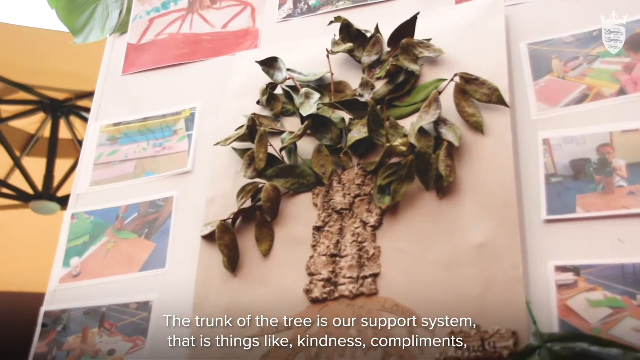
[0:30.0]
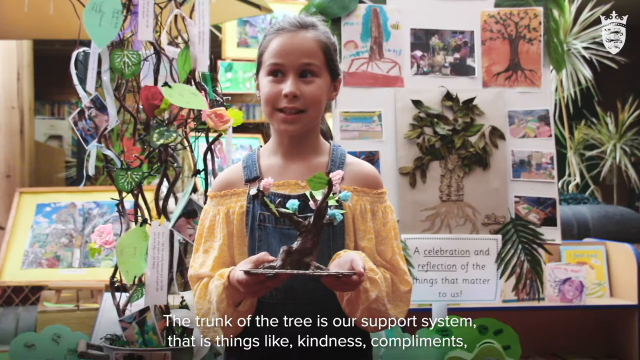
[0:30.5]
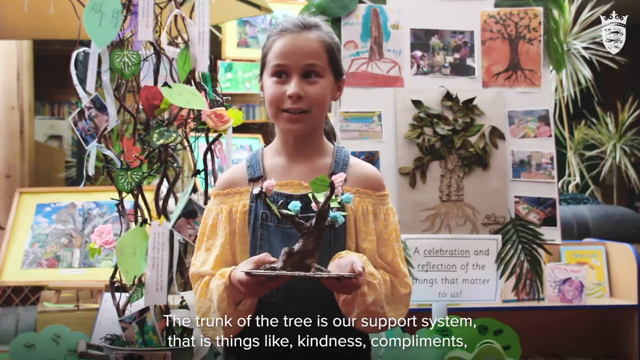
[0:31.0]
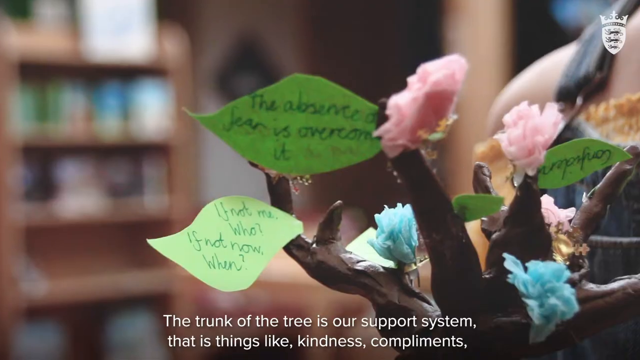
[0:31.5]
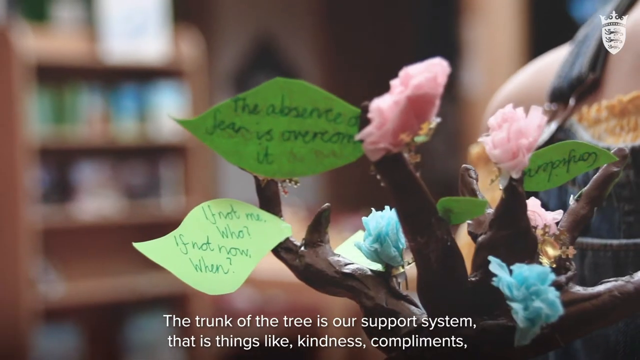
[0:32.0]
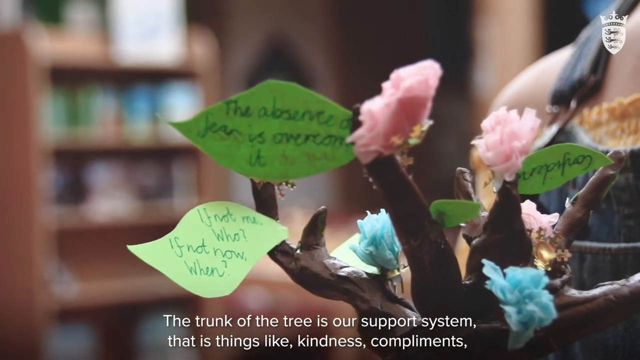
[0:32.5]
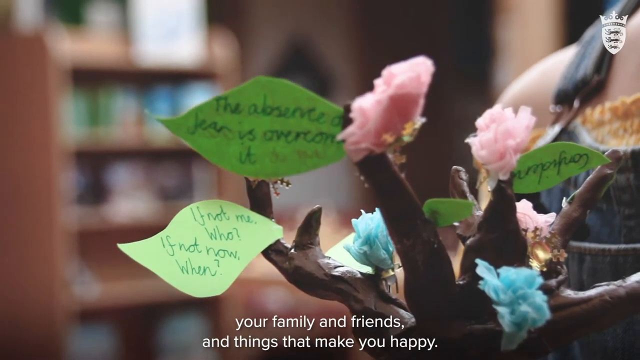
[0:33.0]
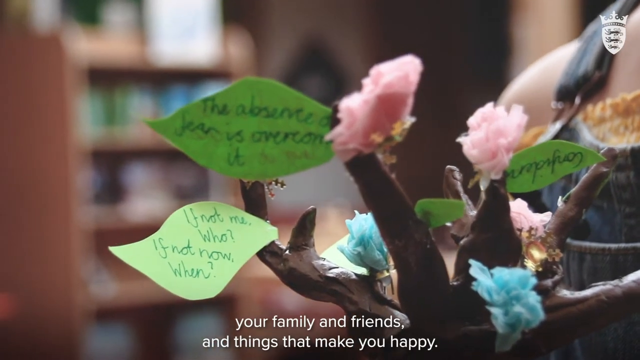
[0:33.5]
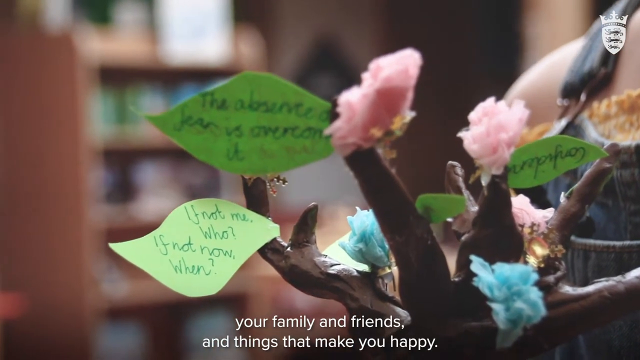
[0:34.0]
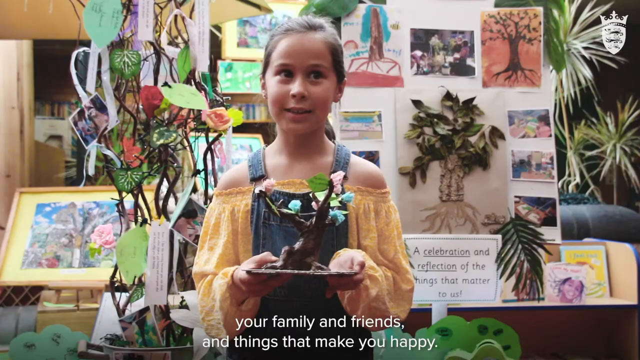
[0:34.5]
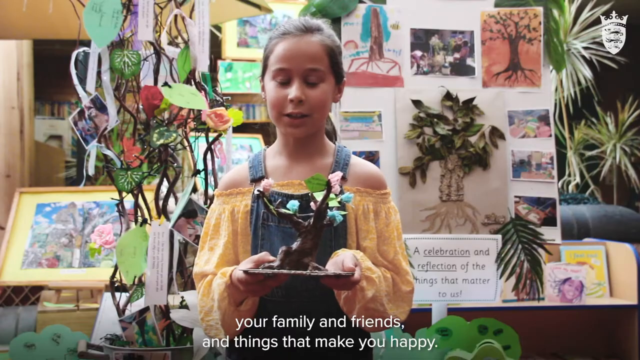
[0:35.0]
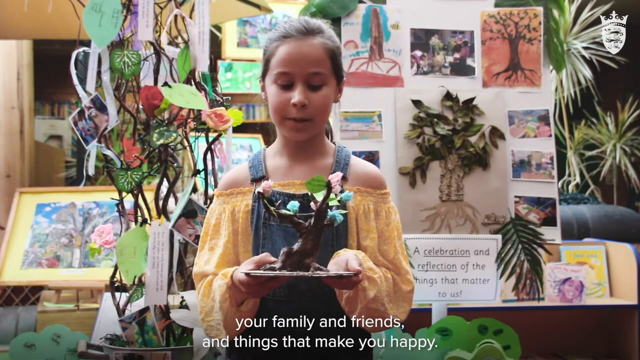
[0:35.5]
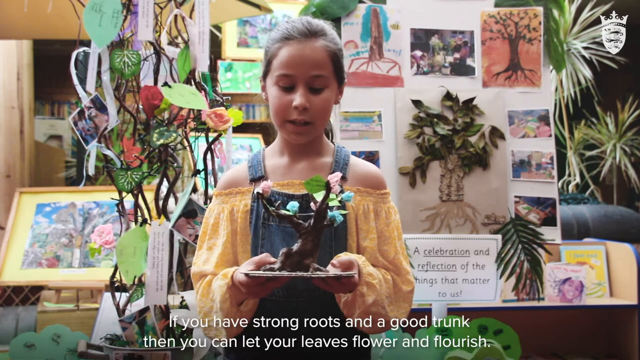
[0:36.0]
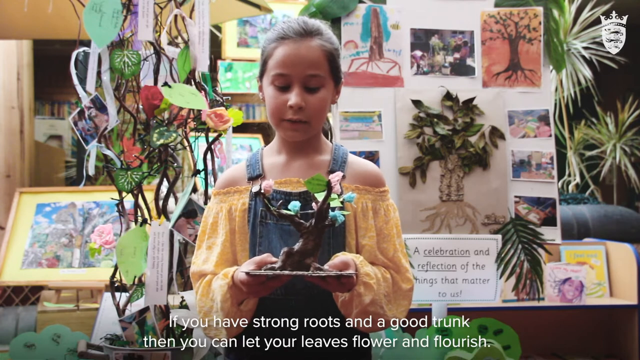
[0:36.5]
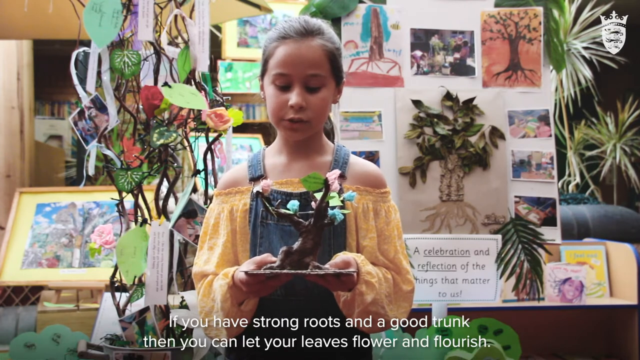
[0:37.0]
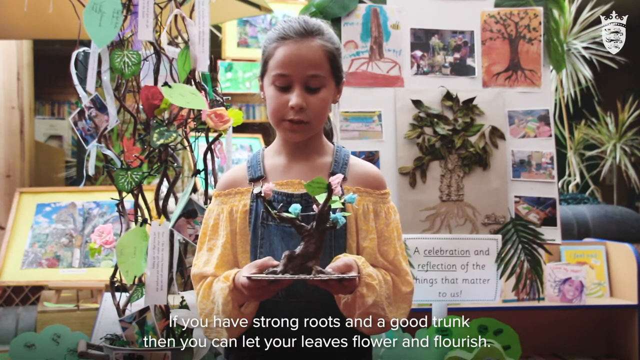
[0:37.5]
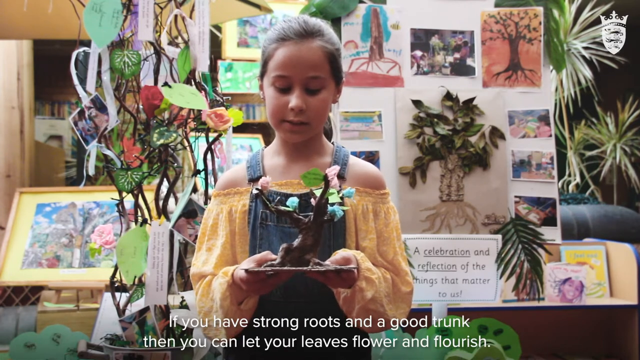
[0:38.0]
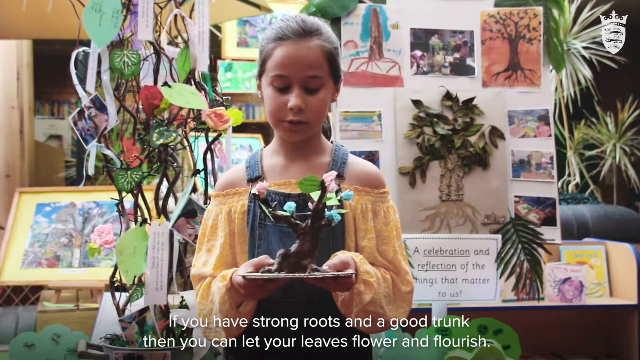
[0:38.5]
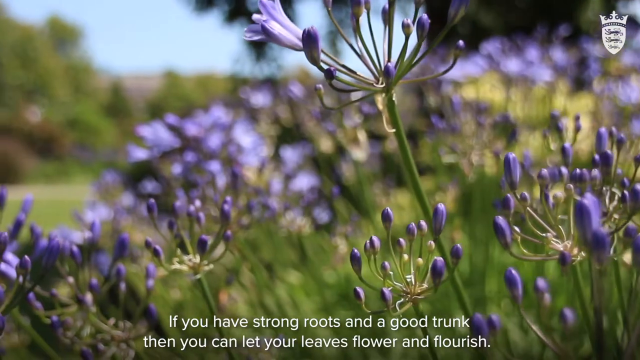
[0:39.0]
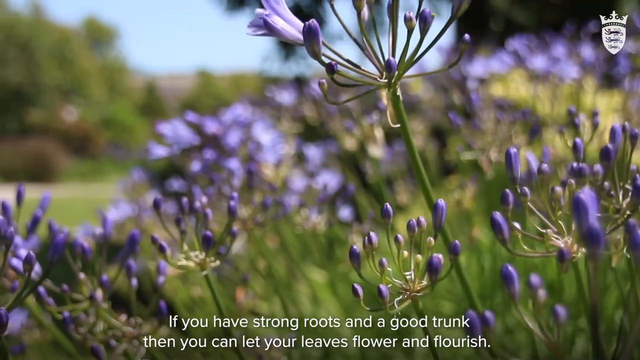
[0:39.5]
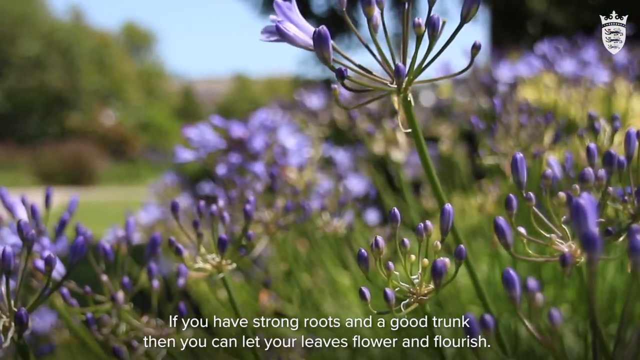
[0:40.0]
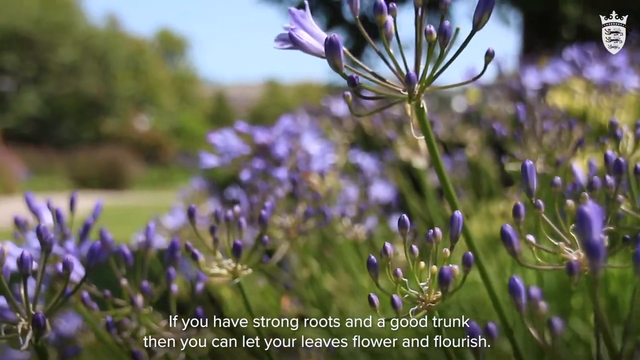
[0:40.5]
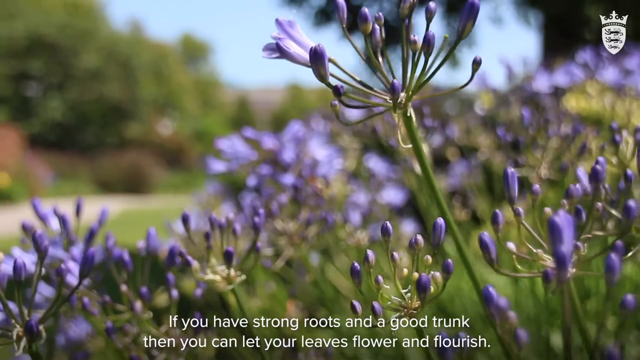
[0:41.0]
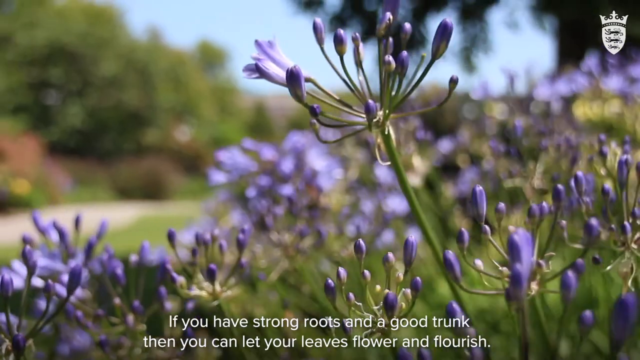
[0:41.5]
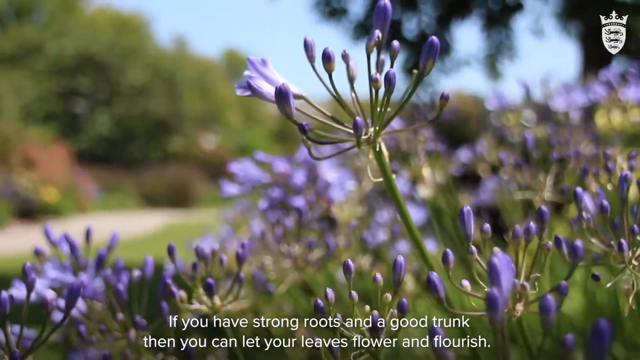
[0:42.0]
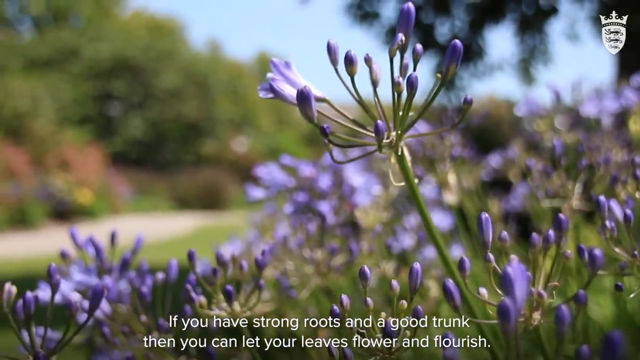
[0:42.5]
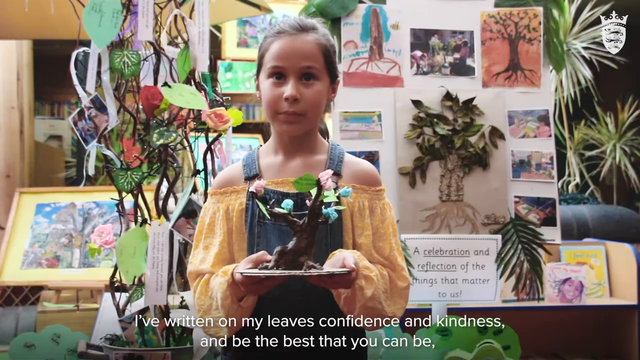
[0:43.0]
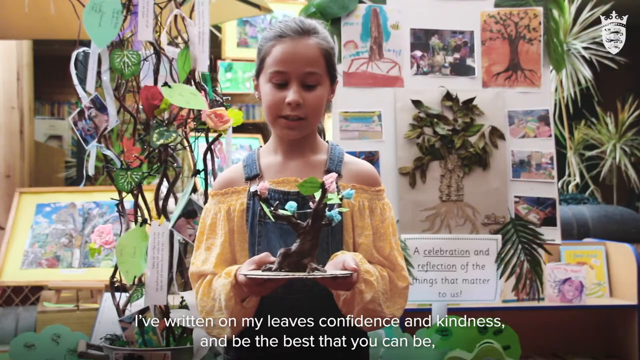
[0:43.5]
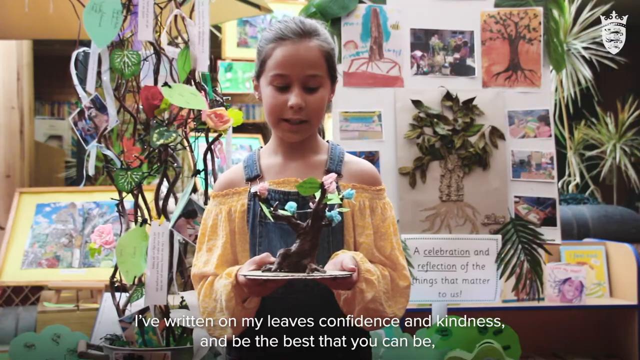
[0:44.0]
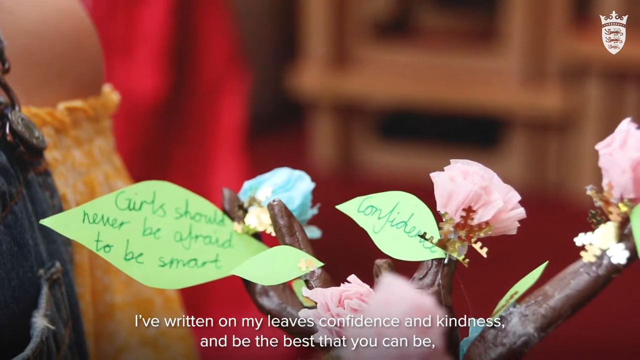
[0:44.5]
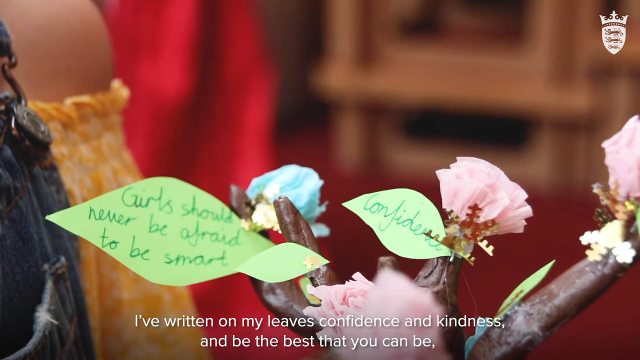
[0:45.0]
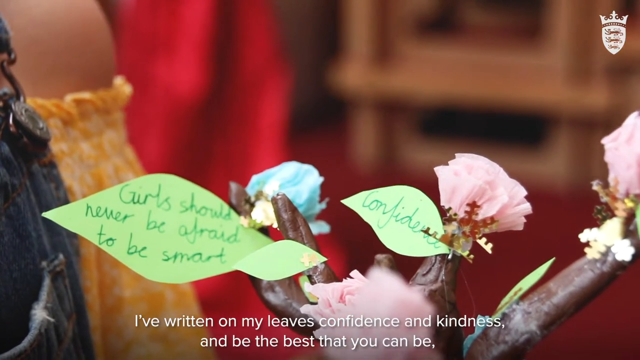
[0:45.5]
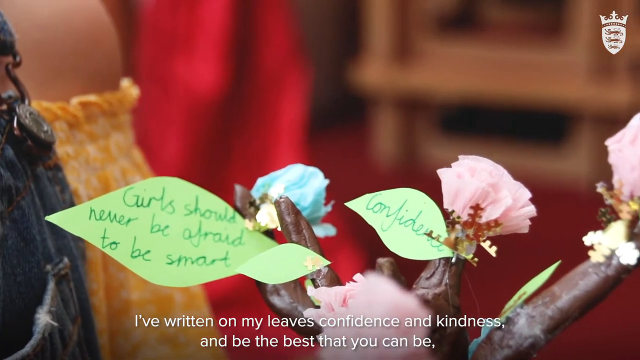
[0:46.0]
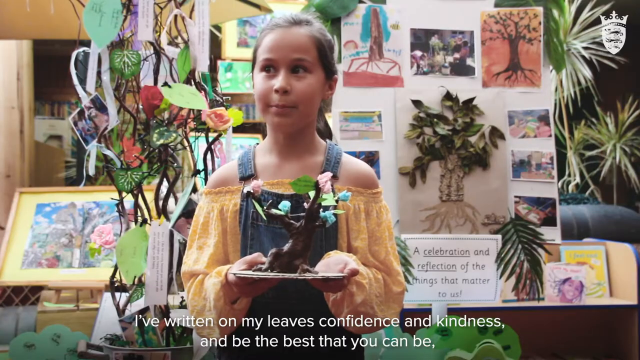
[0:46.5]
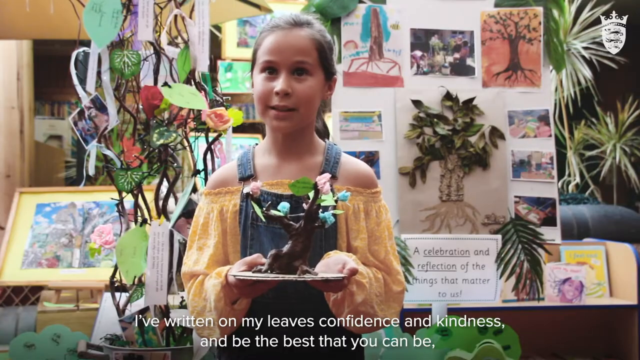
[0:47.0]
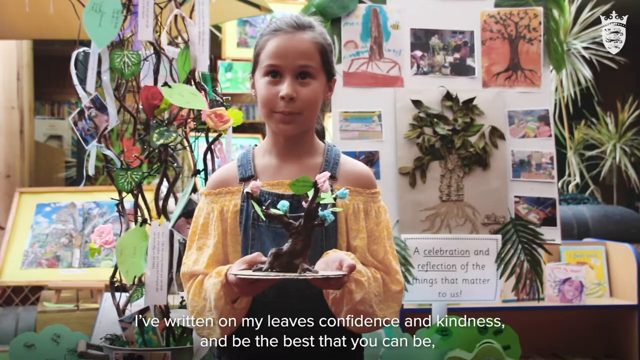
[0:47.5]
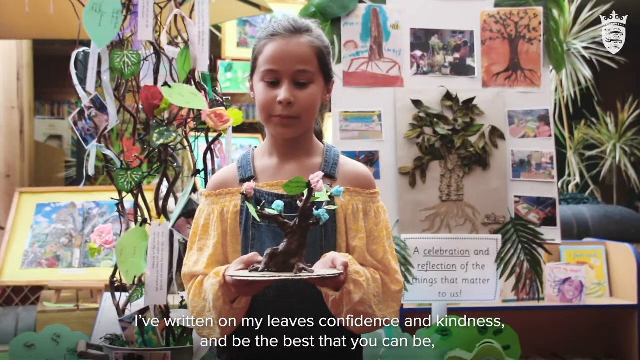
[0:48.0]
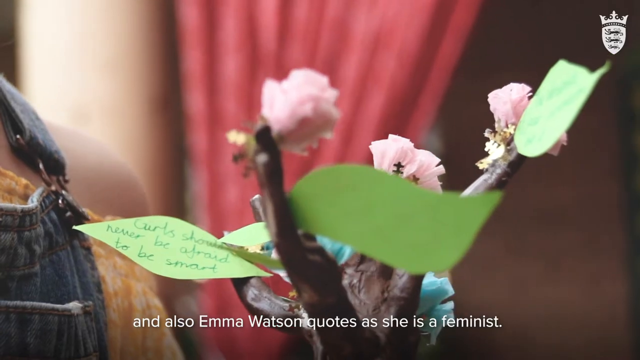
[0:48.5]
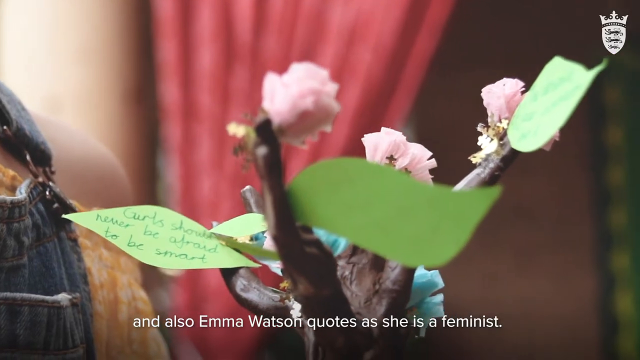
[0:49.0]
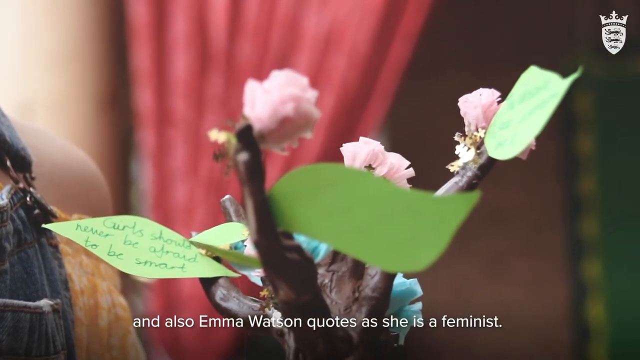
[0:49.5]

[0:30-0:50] A picture of a tree is on the wall, and the video moves to a little girl's tree, the art piece she created, which has names on it. She explains that if you have strong roots and a good trunk, you can flourish. Motivational quotes are on the tree, with messages such as having a good foundation and "don't be afraid to be yourself", apparently positive affirmations and advice. The girl mentions having written confidence on her leaves and quoting Emma Watson because she's a feminist.